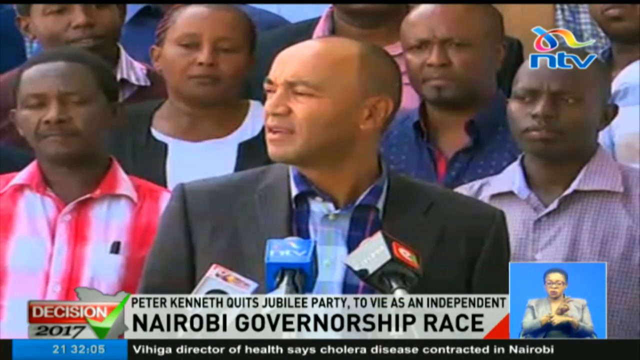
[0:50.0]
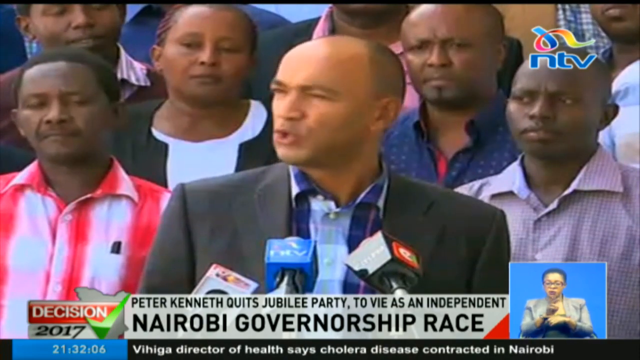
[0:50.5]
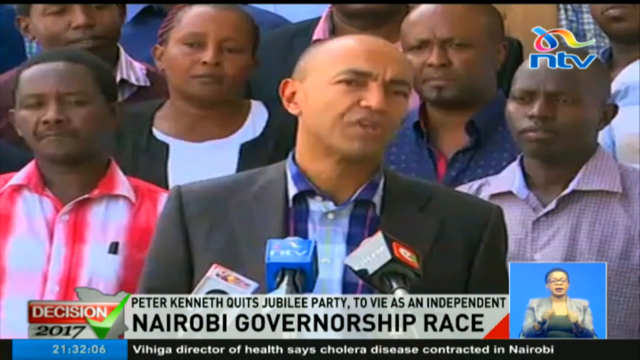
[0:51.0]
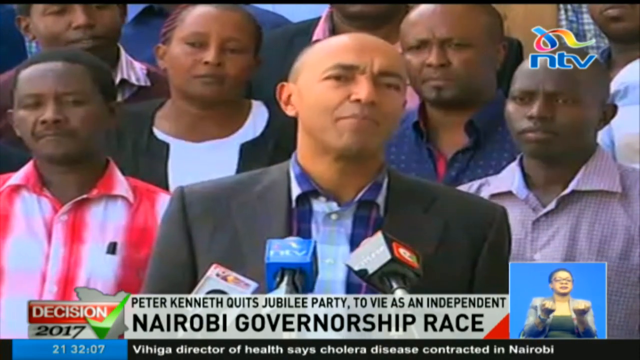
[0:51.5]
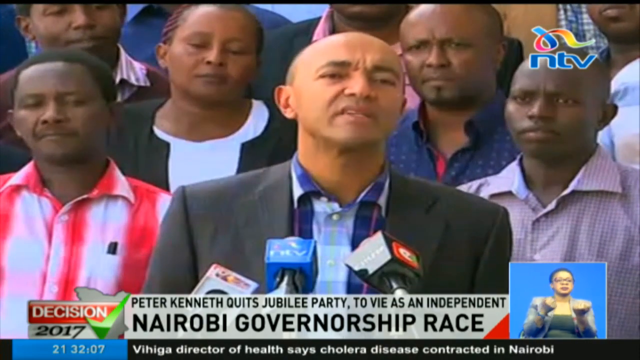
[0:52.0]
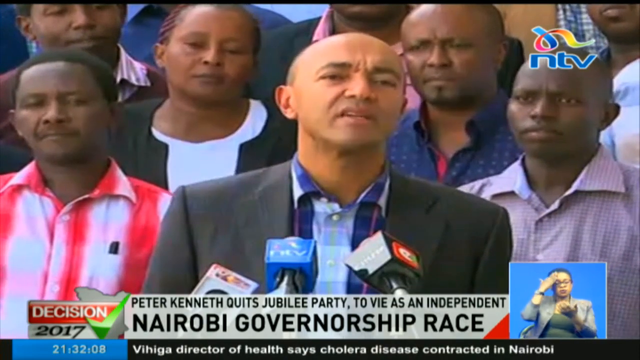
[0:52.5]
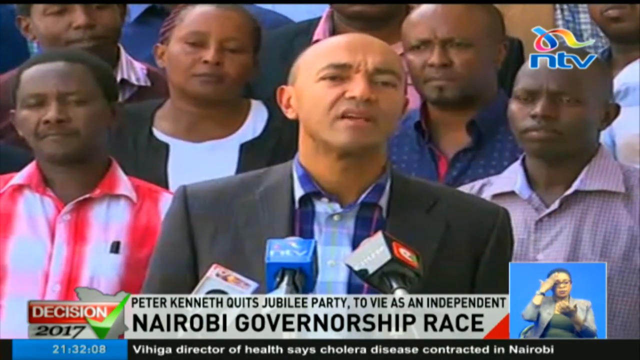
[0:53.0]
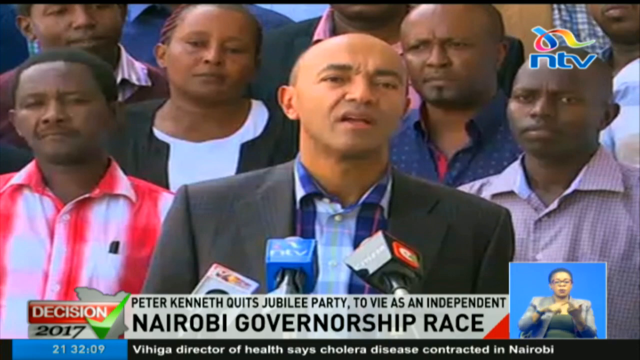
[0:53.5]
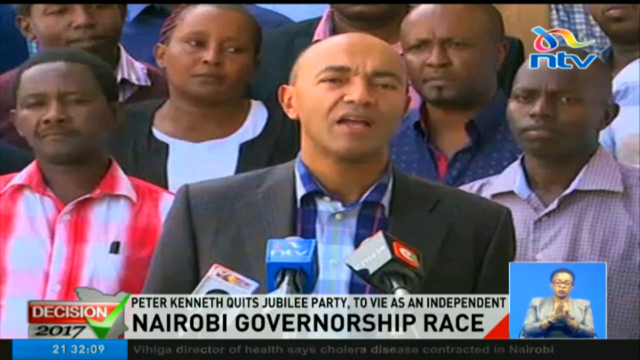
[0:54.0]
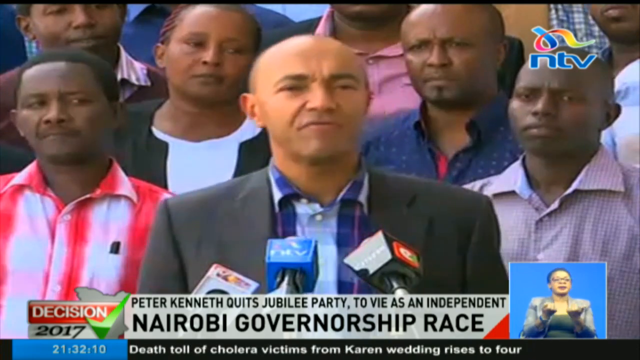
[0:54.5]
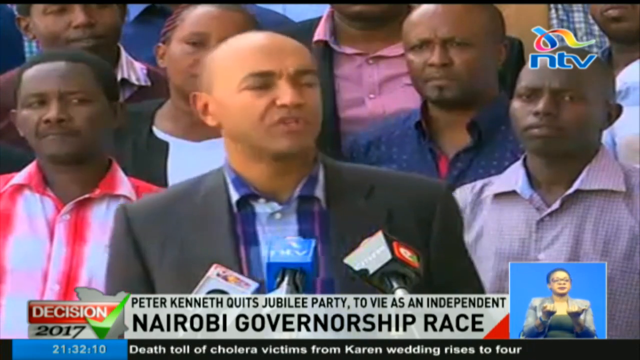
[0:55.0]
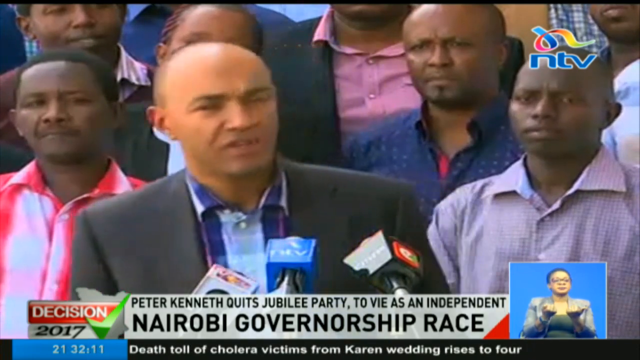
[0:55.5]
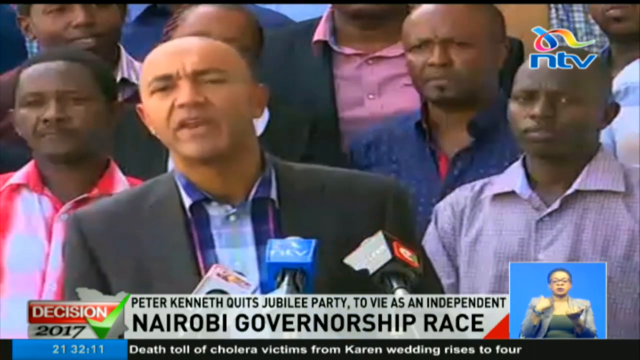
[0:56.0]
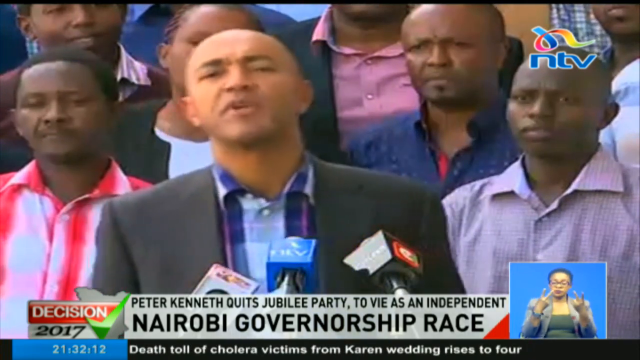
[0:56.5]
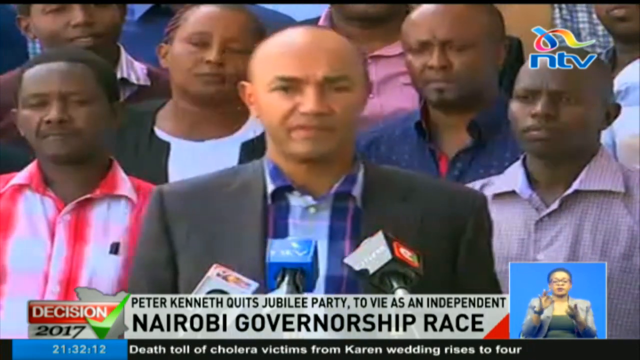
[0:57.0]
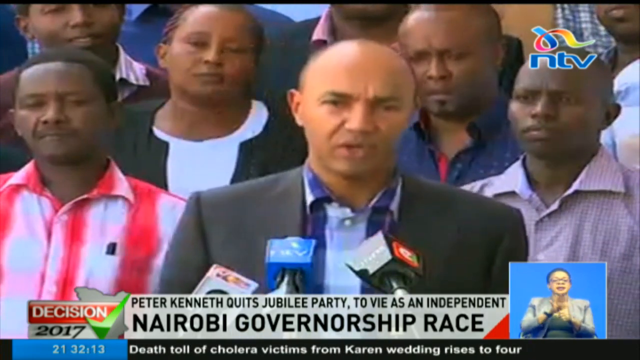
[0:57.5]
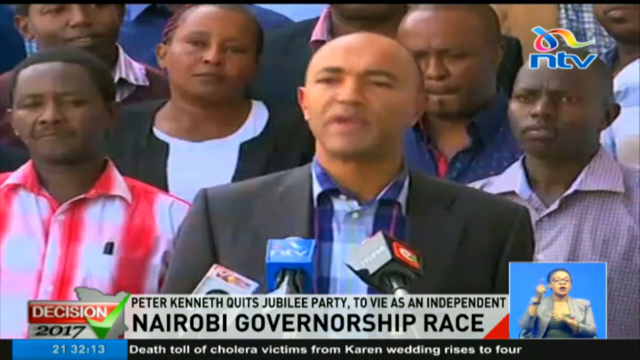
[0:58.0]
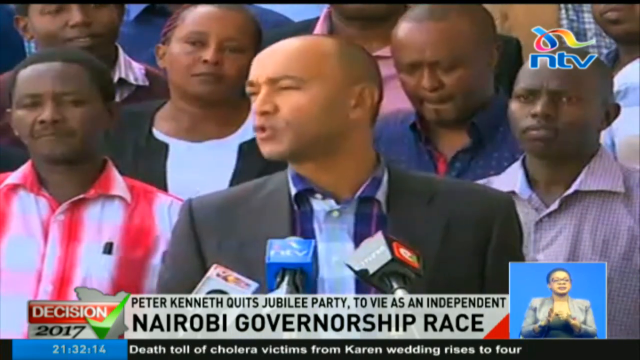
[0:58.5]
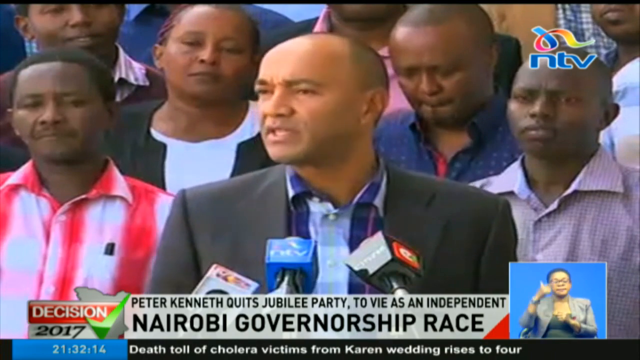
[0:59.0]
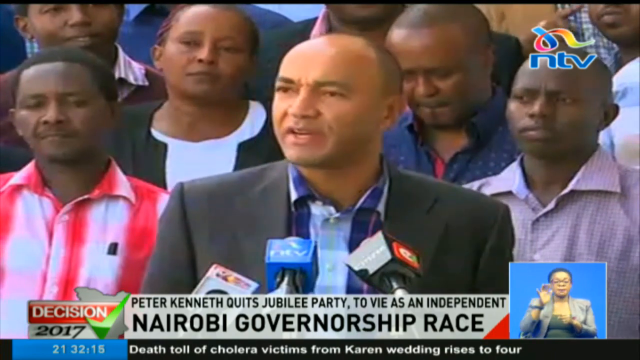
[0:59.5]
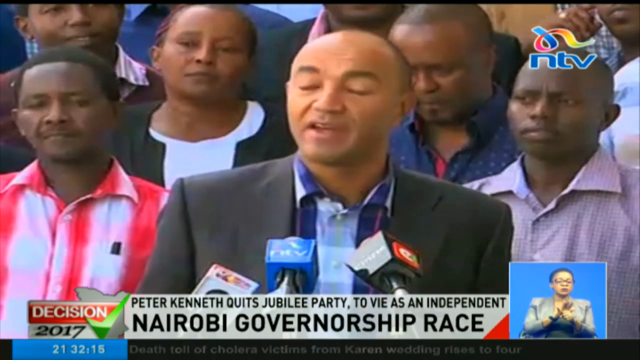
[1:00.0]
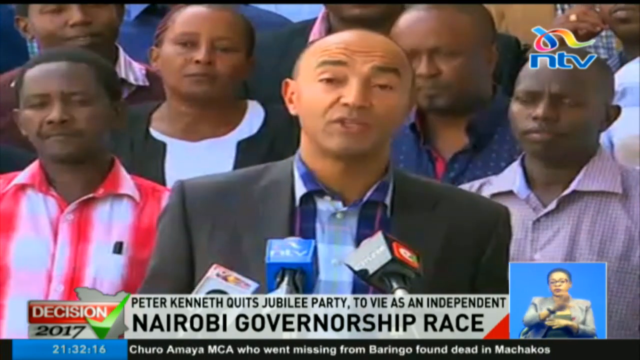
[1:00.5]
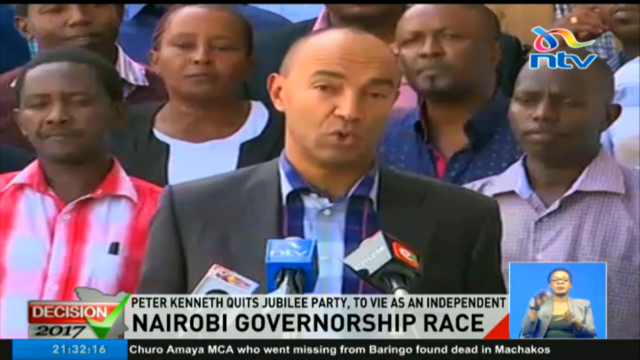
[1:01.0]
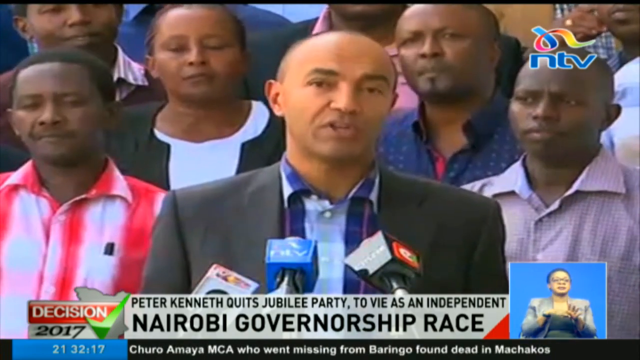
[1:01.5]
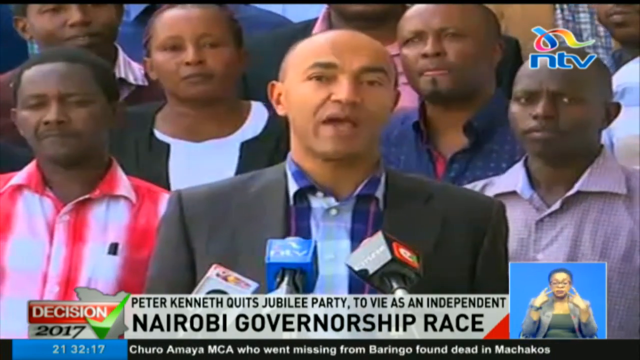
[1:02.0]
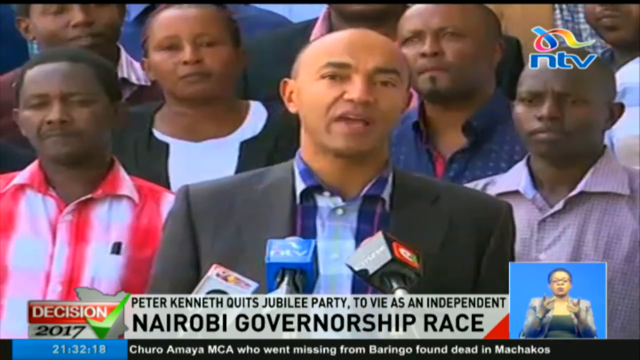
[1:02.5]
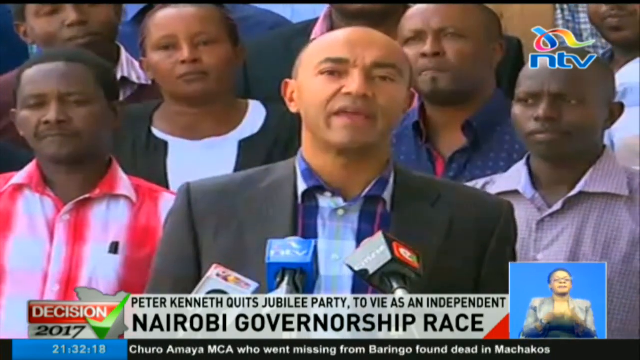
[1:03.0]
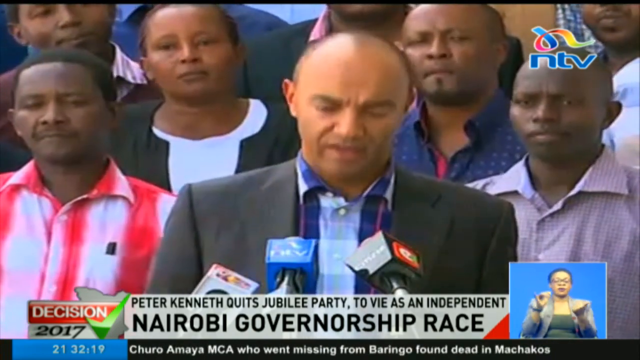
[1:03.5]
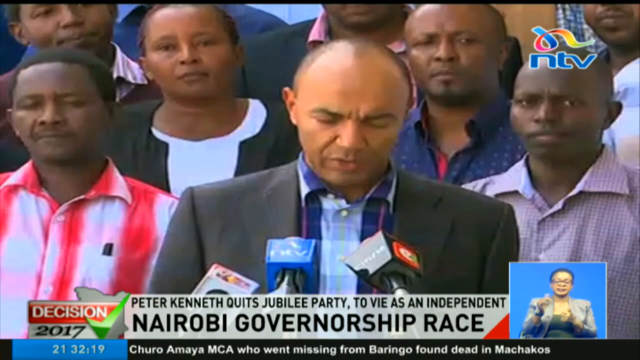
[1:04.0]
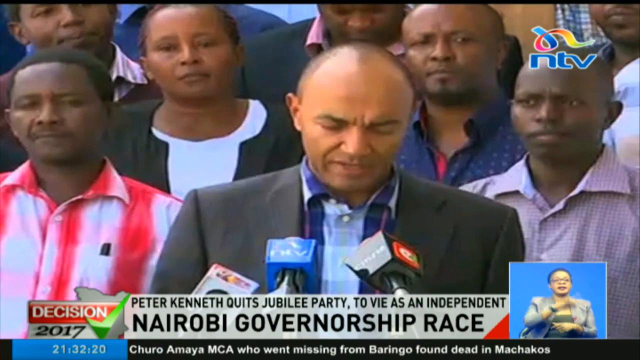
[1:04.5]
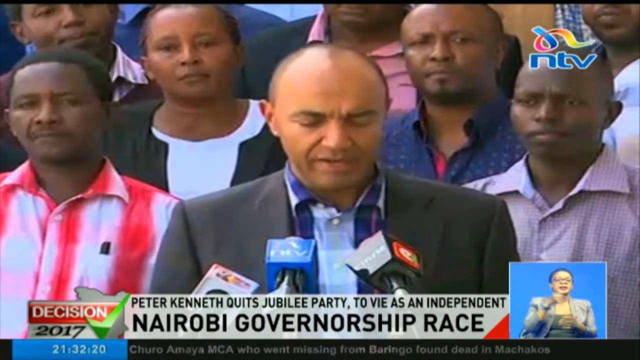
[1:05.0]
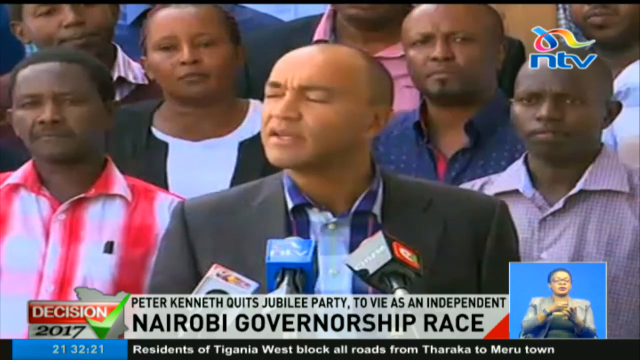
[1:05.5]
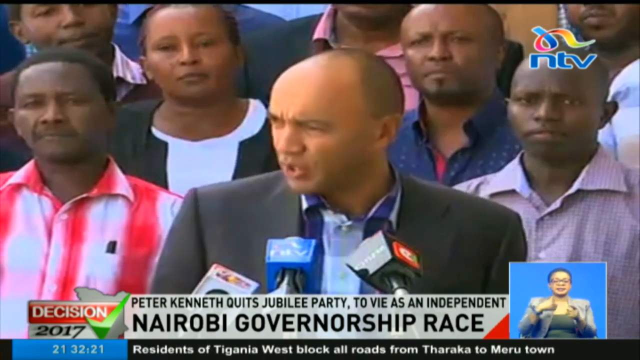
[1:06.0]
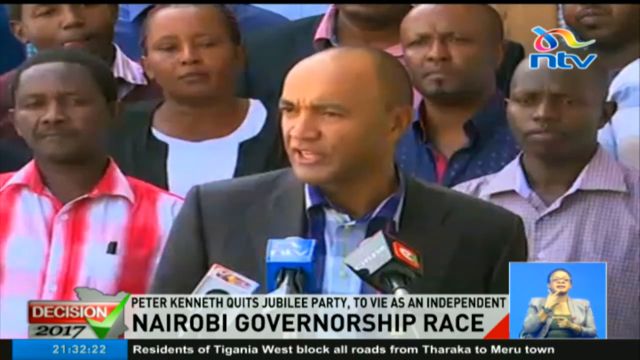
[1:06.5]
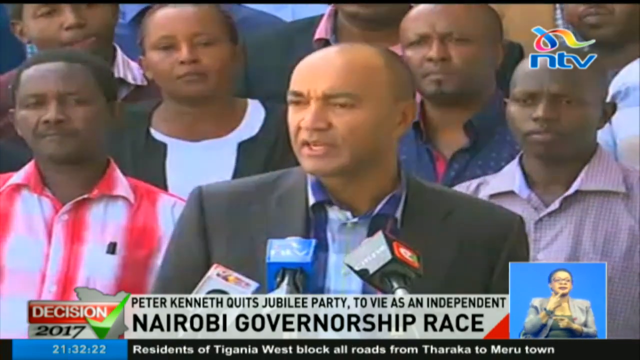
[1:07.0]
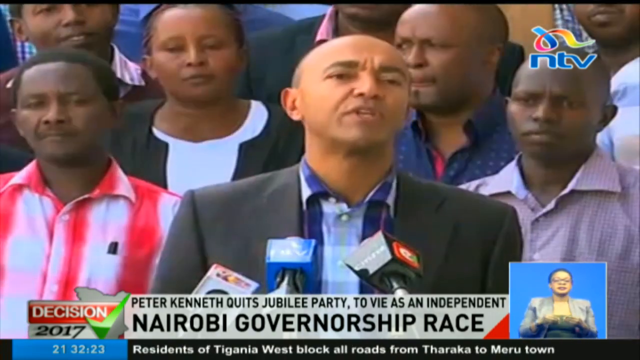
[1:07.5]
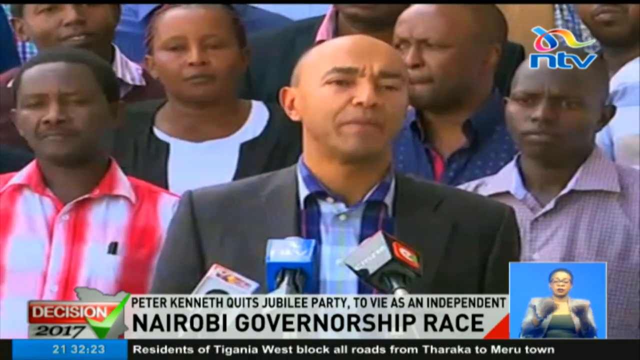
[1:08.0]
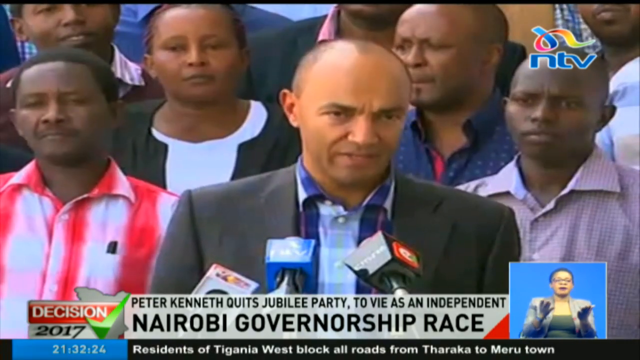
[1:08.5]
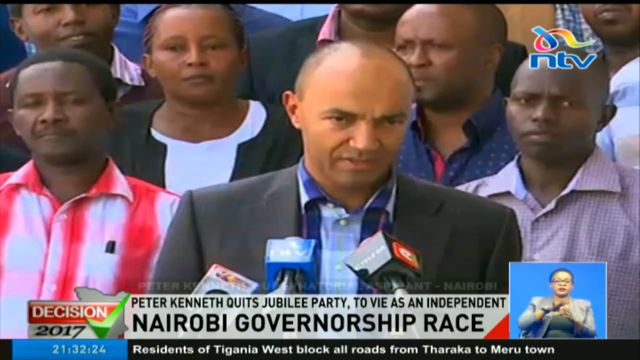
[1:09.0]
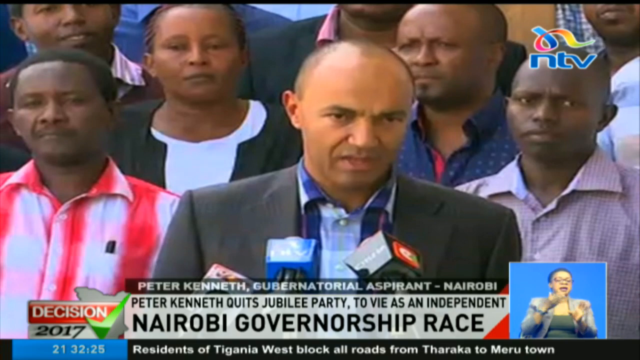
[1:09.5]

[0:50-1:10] A man stands in the center of the screen facing the camera, with several people in the background, all facing the camera. In the bottom right of the screen, on a blue square, a standing woman does sign language. A white banner in the center of the screen begins "Peter Kenneth quits Jubilee Party," and below that it reads "NAIROBI governorship race." On the left side it says "Decision 2017." The man talks, looking toward the left side of the screen, then brings his head back and looks toward the camera. He sort of leans toward the left side of the screen, sways back to the right, looks to the left side of the screen as he talks, raises his eyebrows and lowers them, continues talking, looks down in front of him, then looks toward the left side of the screen, talking and nodding his head.